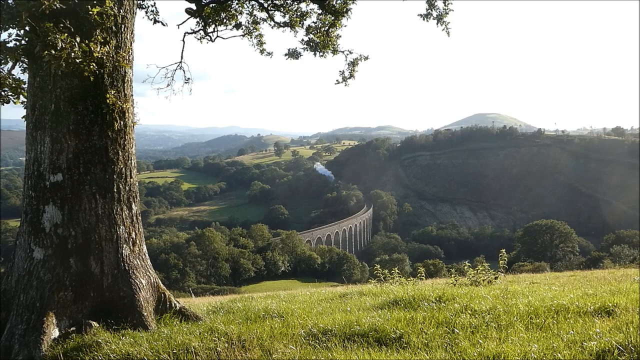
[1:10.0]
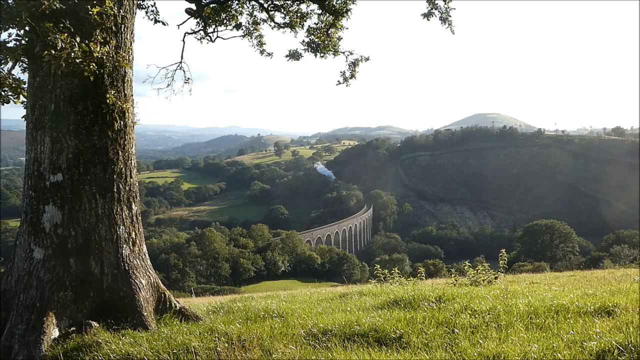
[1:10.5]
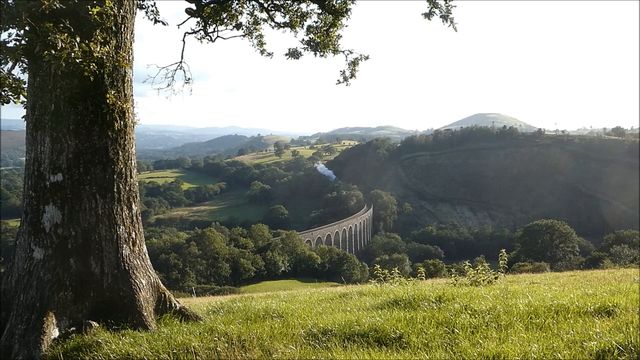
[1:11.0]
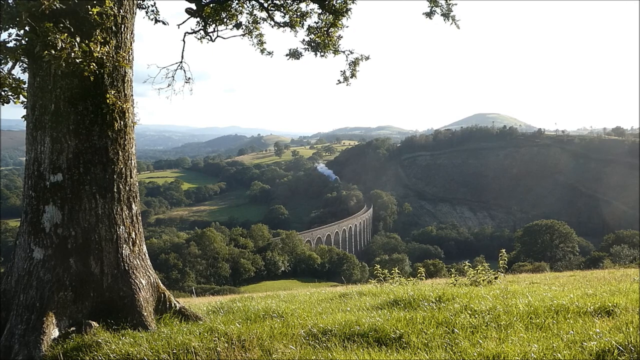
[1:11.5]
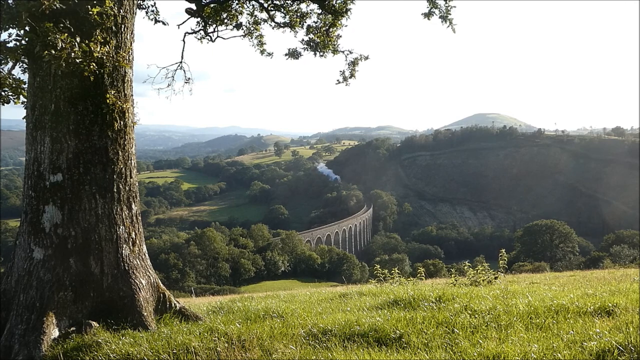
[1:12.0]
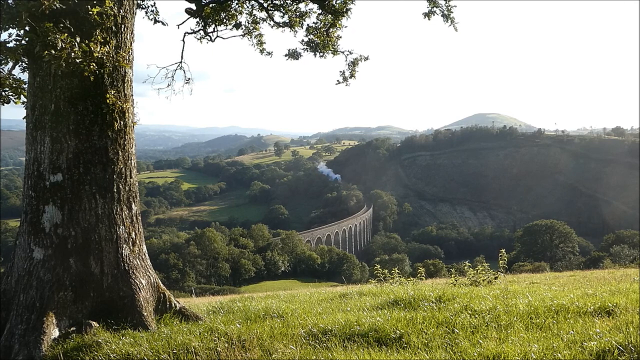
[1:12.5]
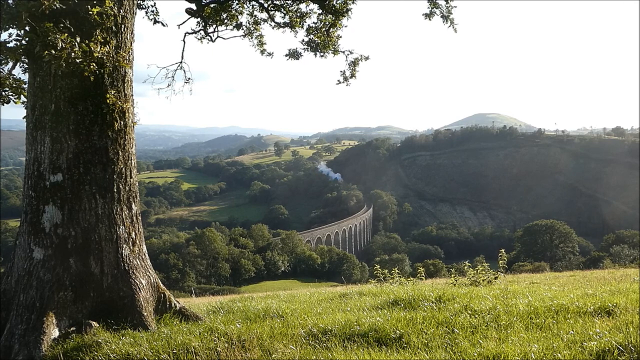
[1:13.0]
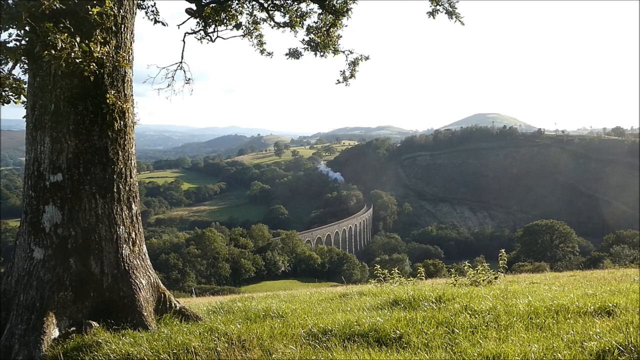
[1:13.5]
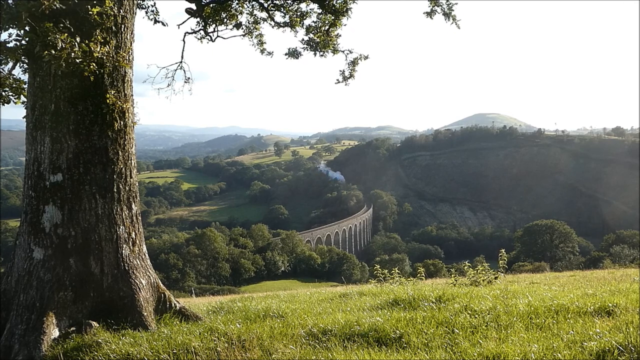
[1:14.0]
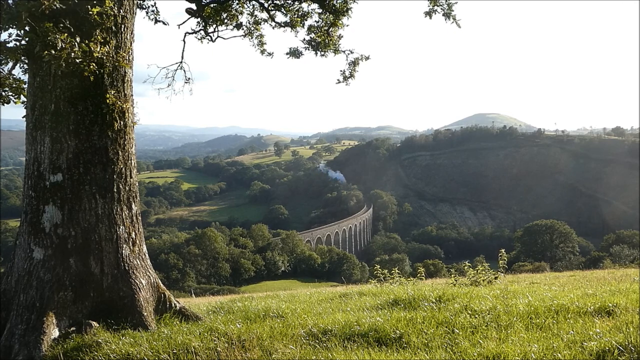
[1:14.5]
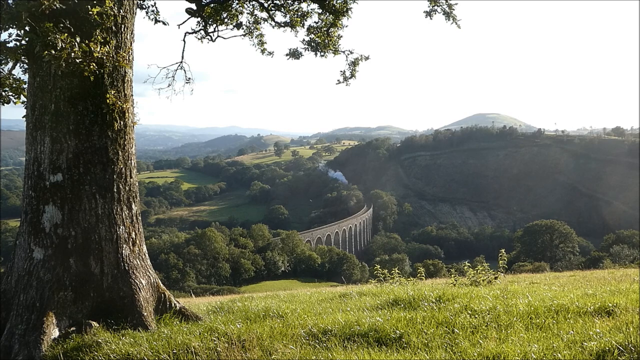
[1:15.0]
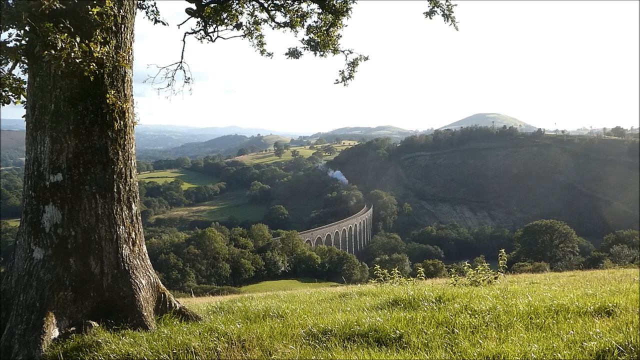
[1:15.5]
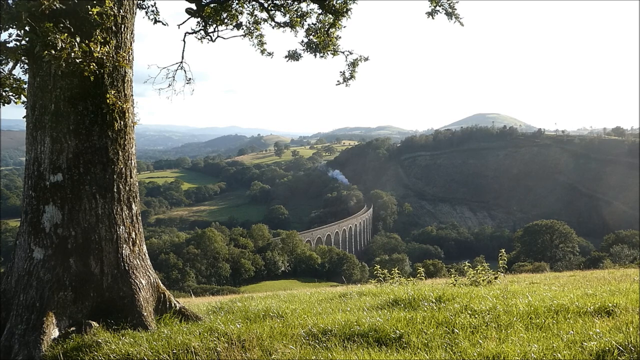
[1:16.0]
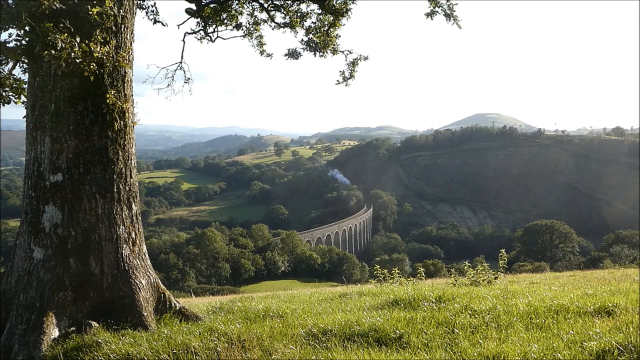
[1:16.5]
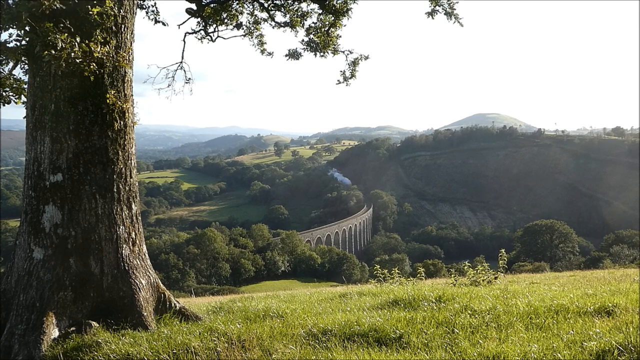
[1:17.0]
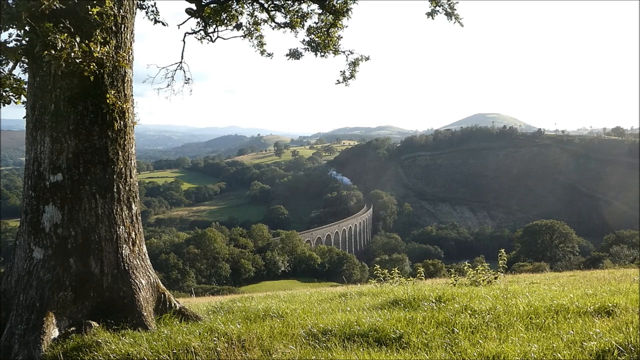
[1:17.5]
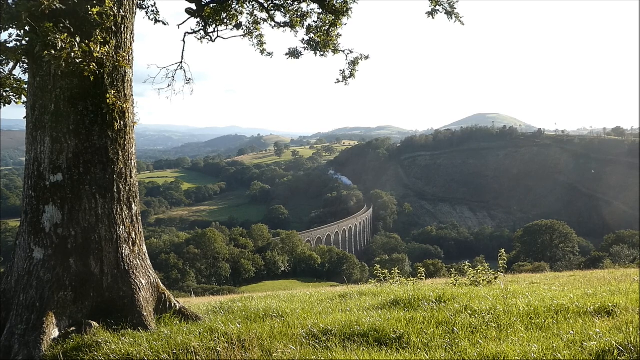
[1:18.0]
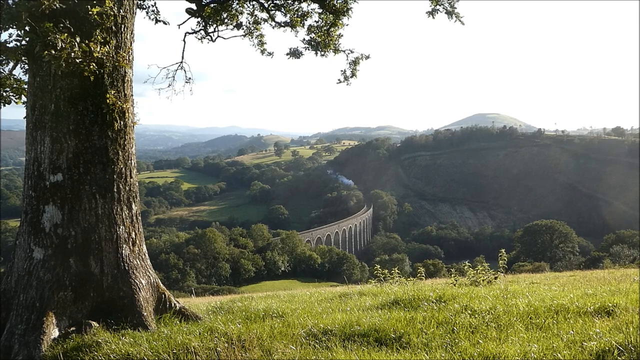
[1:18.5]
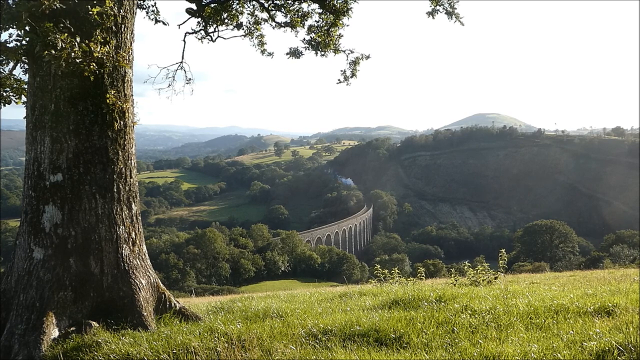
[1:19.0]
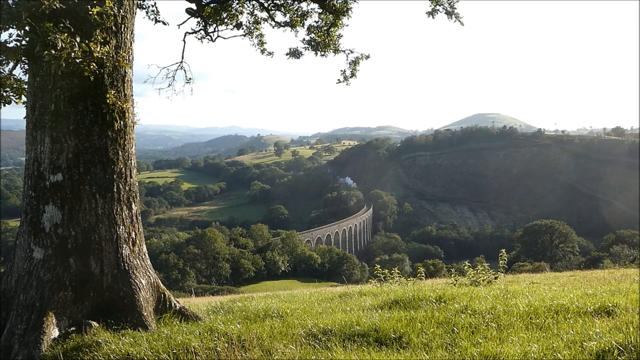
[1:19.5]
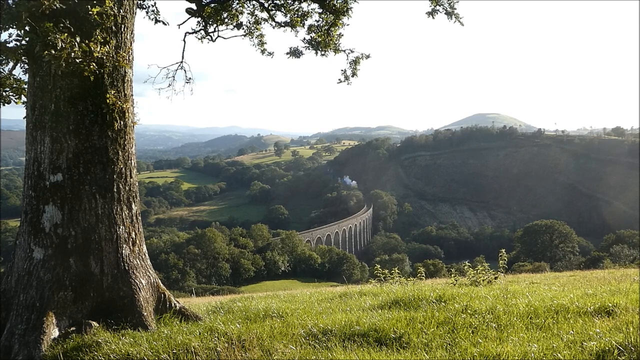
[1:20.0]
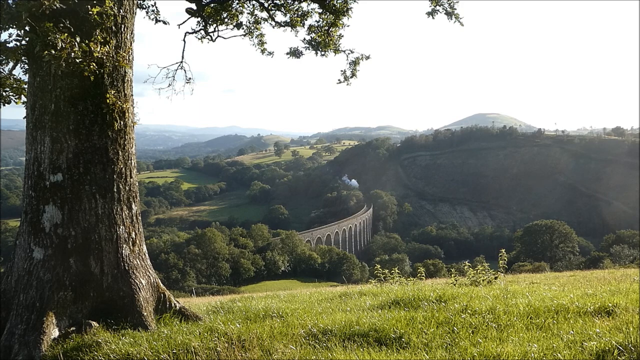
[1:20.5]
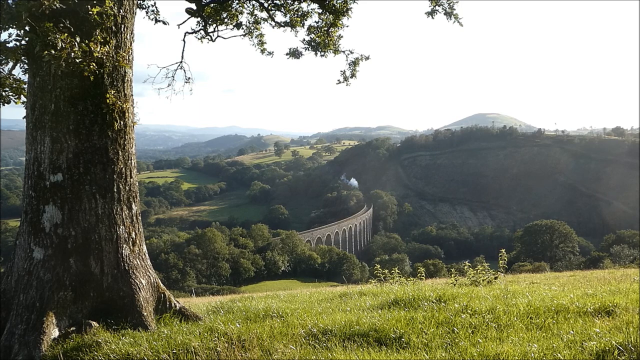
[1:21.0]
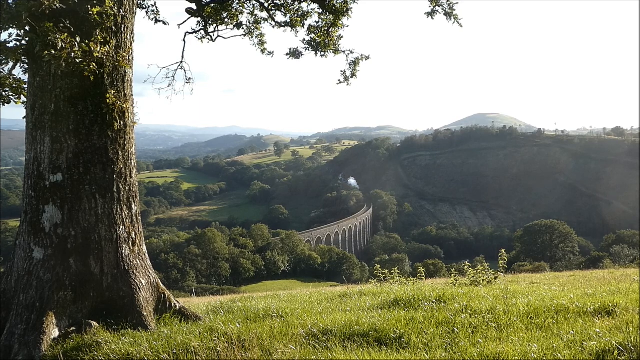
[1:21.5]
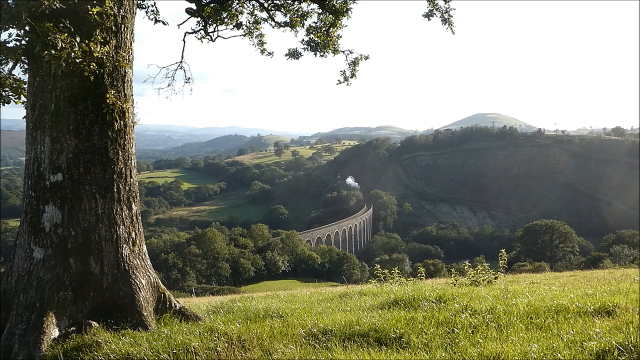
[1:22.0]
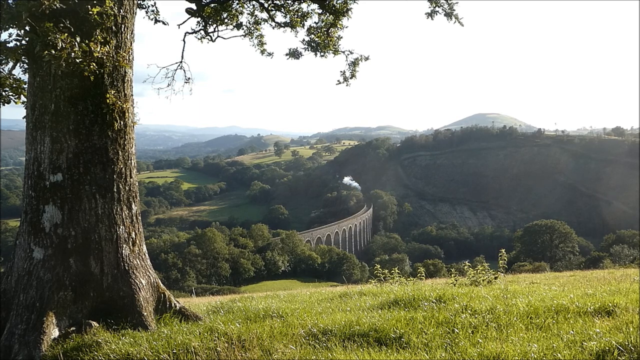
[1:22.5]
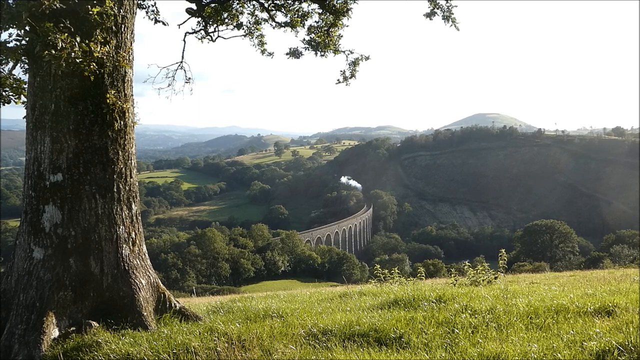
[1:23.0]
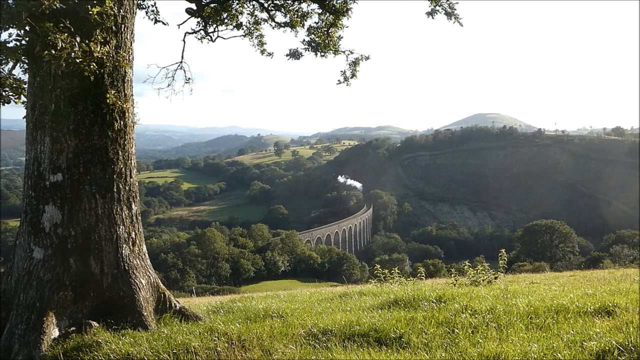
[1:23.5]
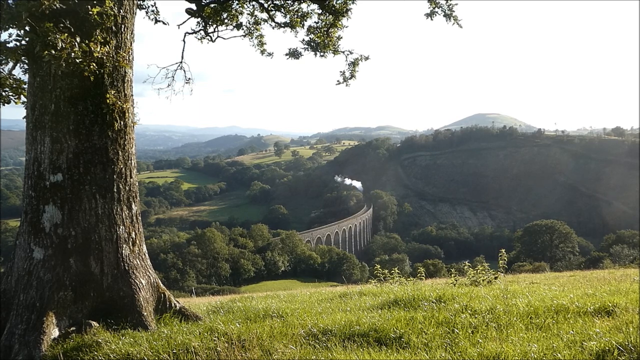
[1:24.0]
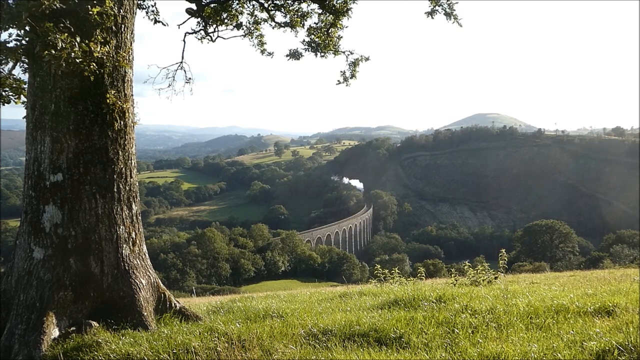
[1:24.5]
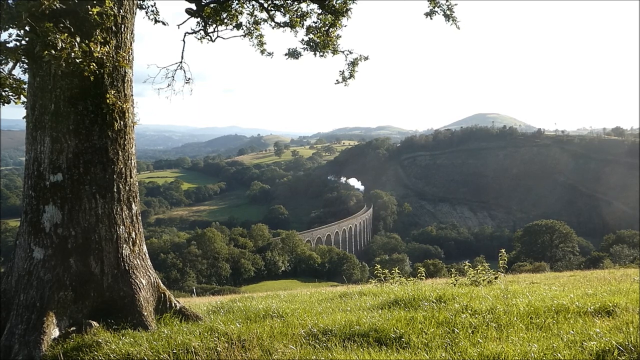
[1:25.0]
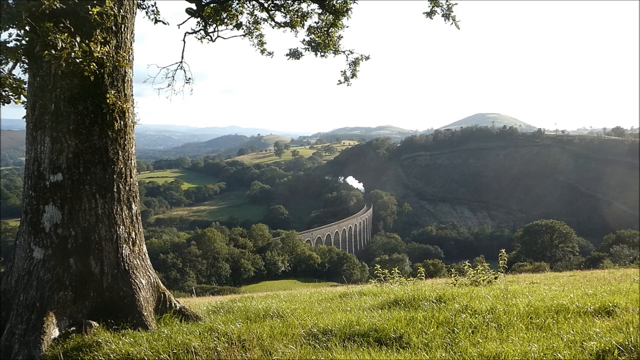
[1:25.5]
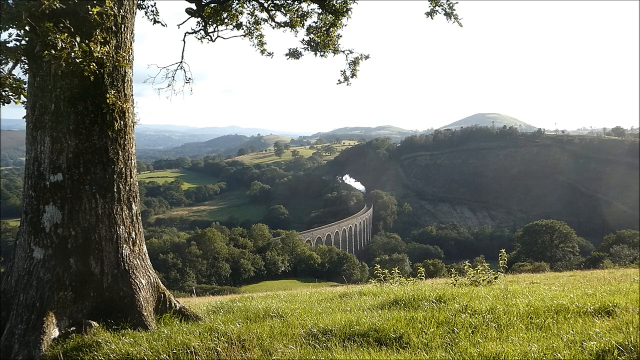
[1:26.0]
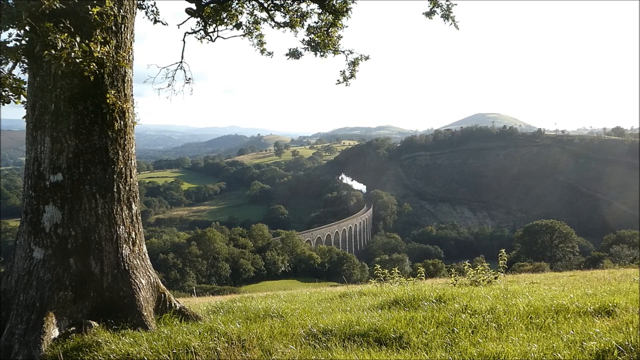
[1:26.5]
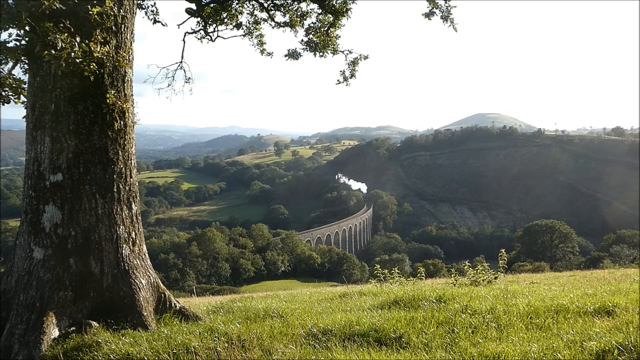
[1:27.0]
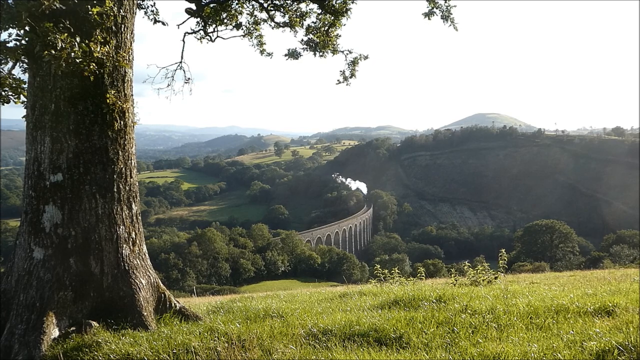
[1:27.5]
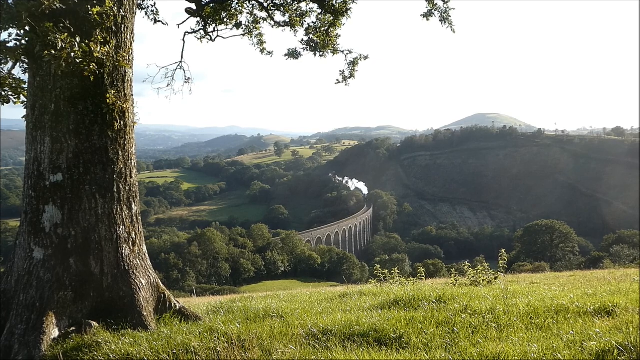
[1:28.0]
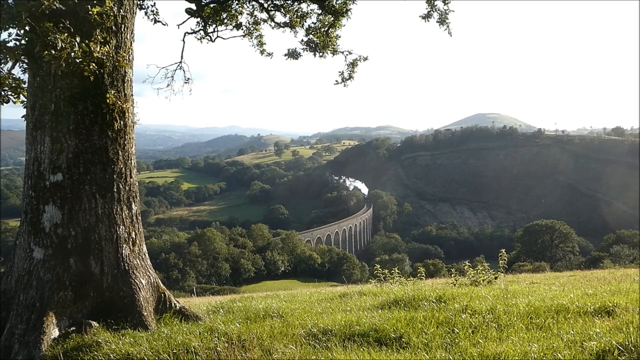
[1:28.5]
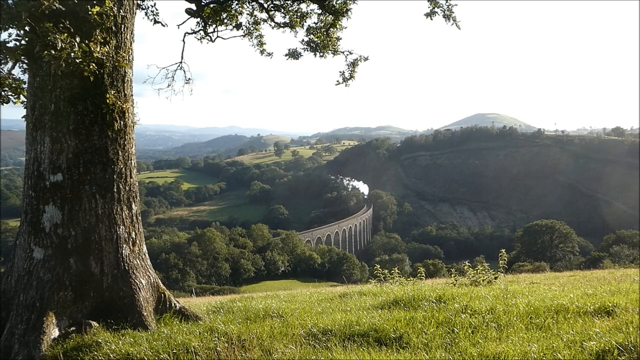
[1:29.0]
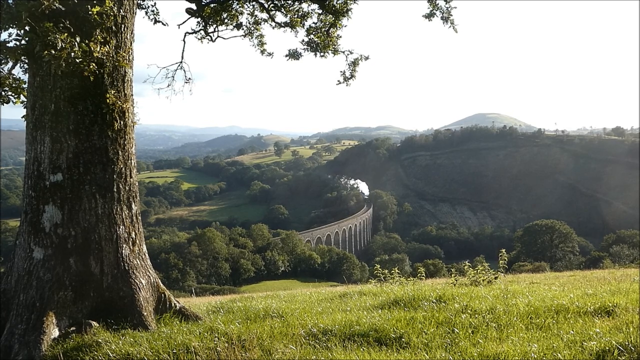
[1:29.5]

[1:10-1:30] The train continues progressing from the back toward the front of the scene, though the train itself does not come fully into the picture; only the smoke, moving much closer, shows it is approaching. At first the smoke is covered by shadows while it is still in the center, kind of covered by the mountainside on the right-hand side, but once it reaches the light it turns completely white. The background remains the same as the train makes its way toward the bridge in the center. The bridge is a small section with arches on the bottom and looks like it is made of stone or concrete. Nothing else is happening apart from the nature and the train's progress.